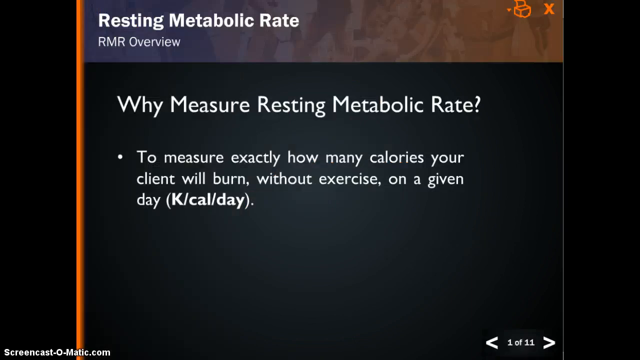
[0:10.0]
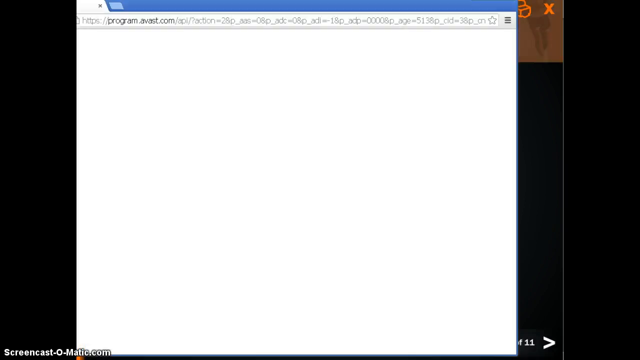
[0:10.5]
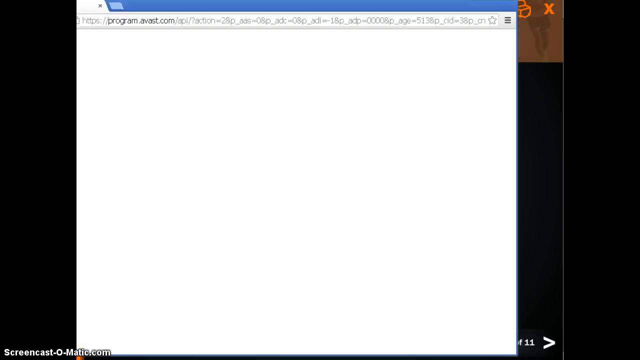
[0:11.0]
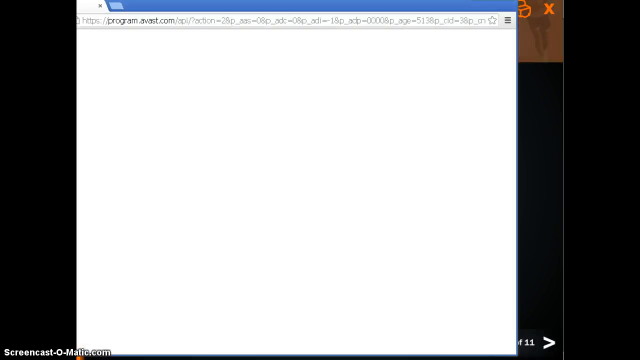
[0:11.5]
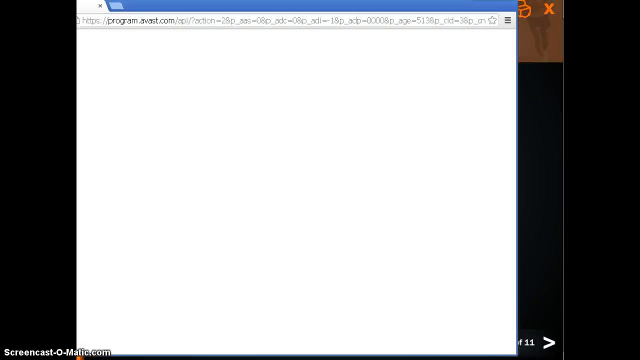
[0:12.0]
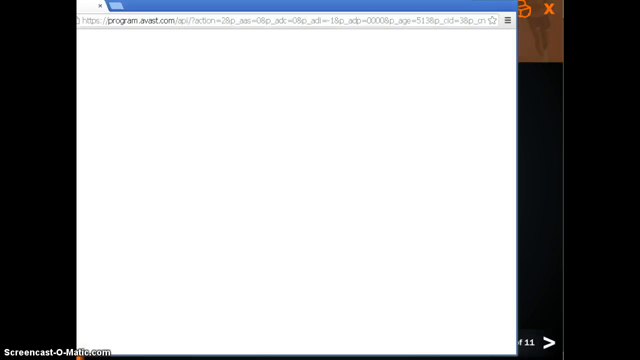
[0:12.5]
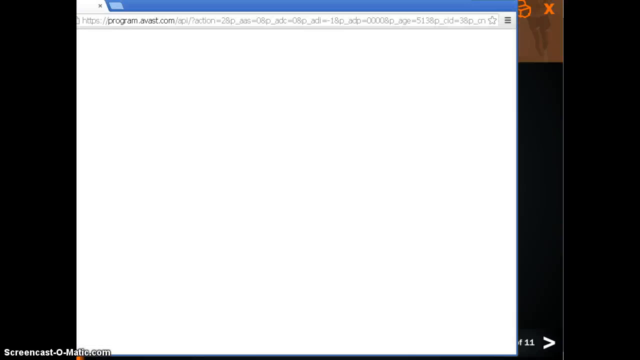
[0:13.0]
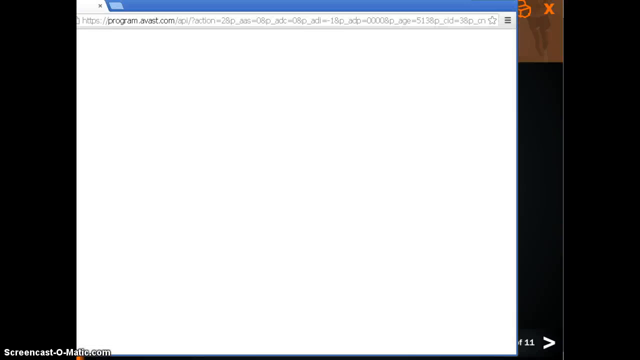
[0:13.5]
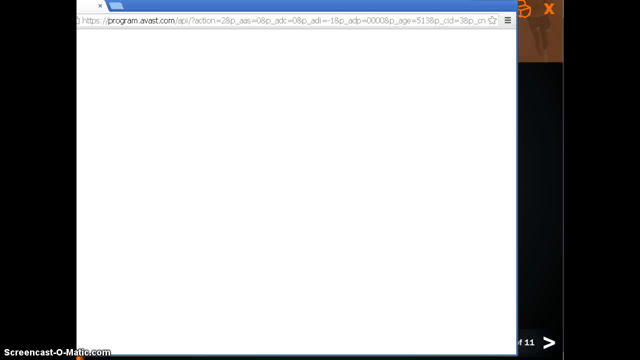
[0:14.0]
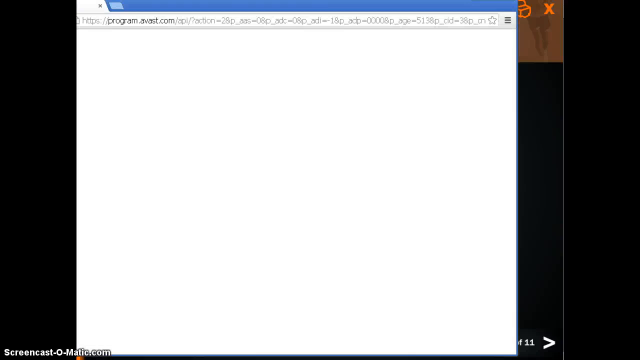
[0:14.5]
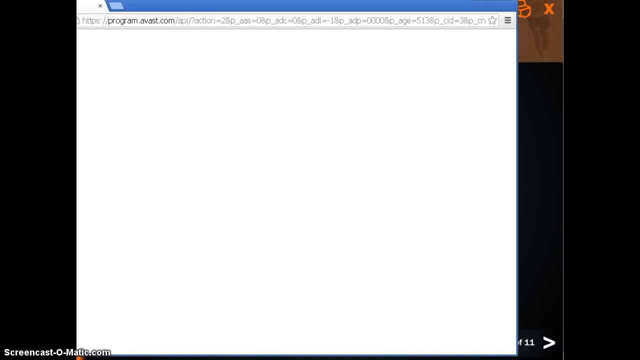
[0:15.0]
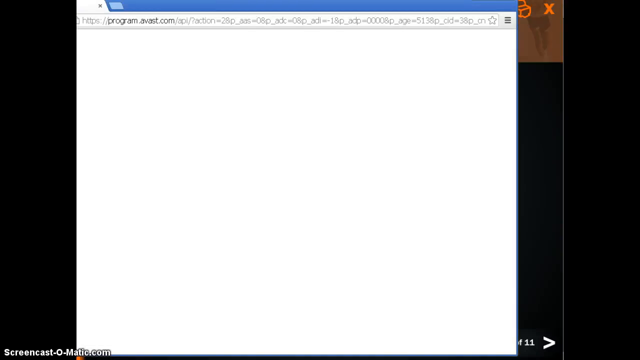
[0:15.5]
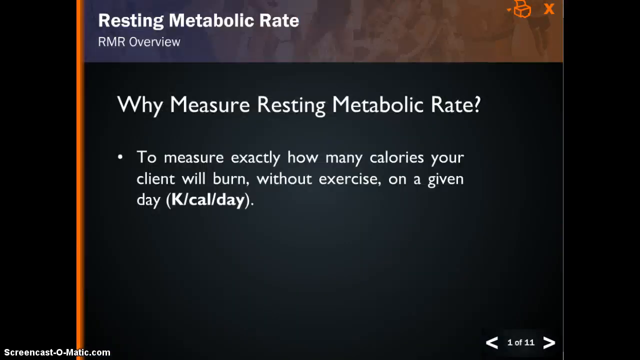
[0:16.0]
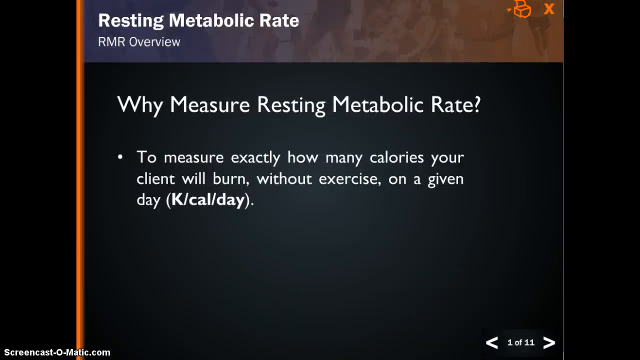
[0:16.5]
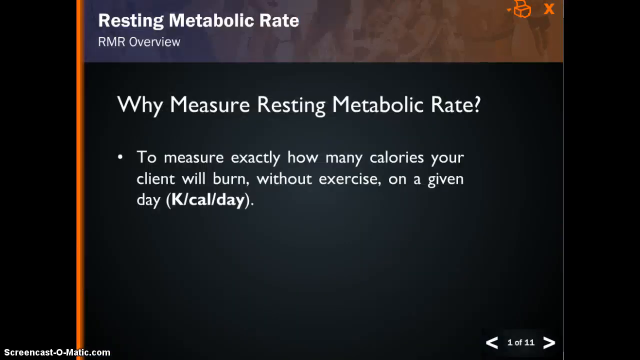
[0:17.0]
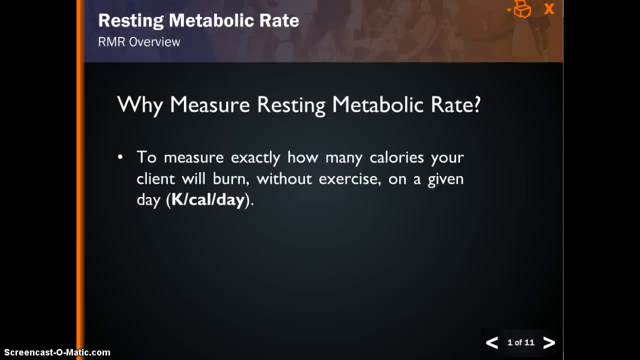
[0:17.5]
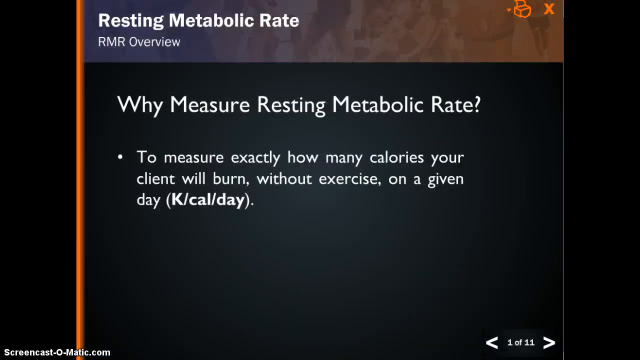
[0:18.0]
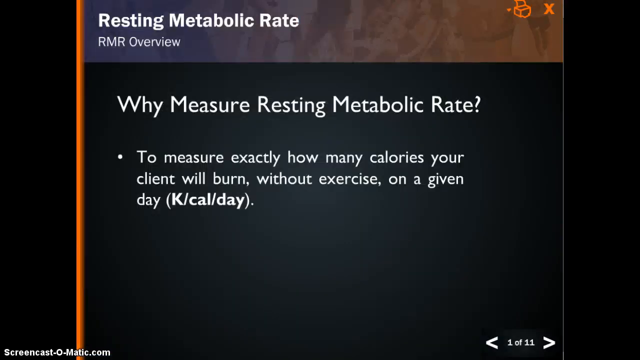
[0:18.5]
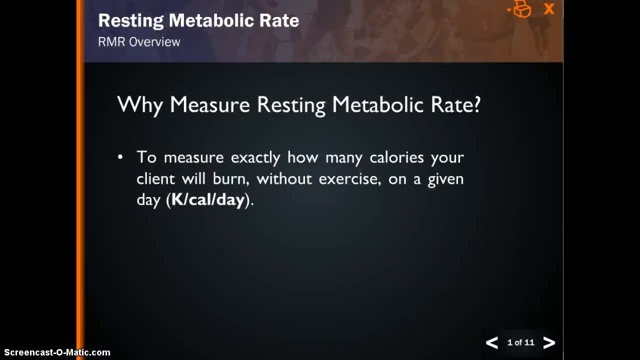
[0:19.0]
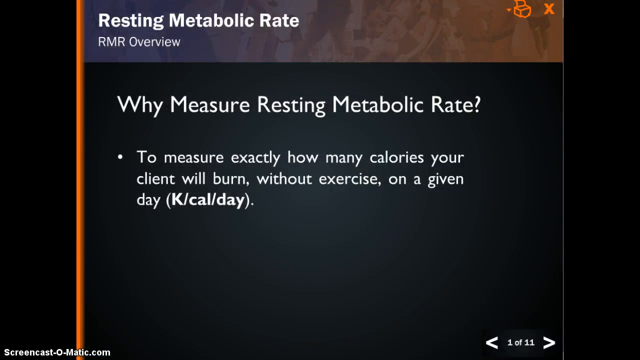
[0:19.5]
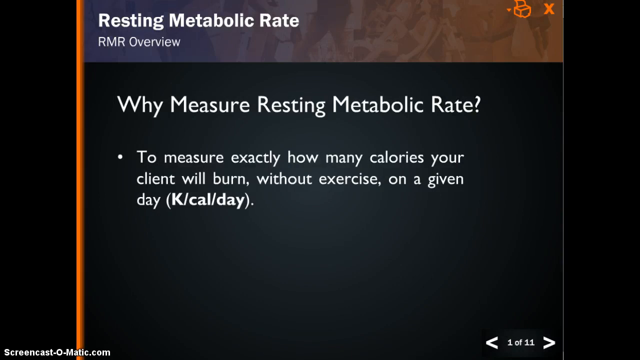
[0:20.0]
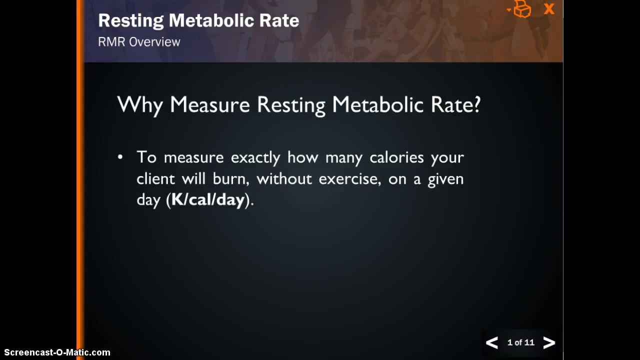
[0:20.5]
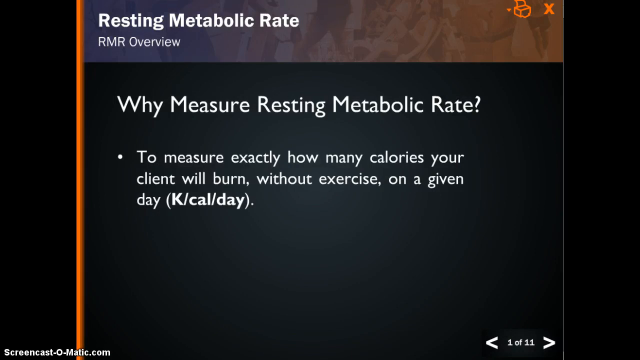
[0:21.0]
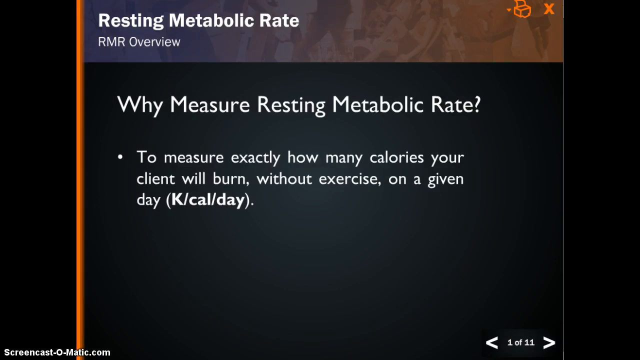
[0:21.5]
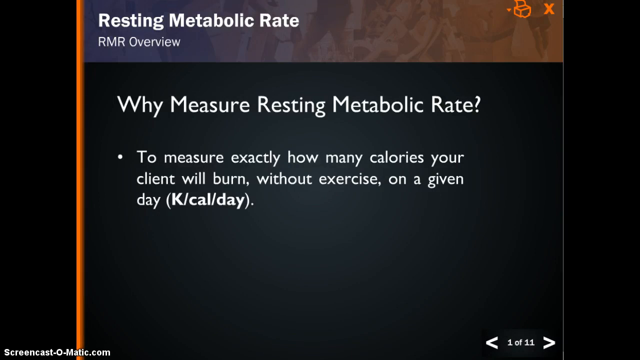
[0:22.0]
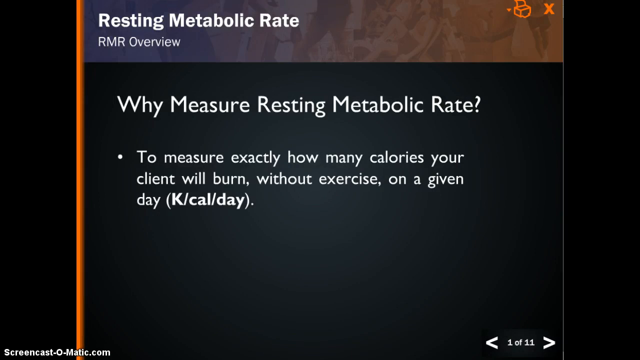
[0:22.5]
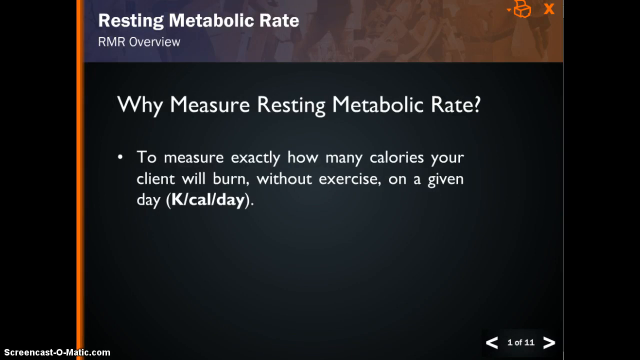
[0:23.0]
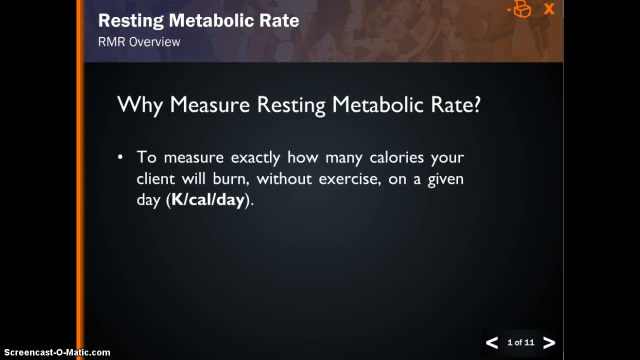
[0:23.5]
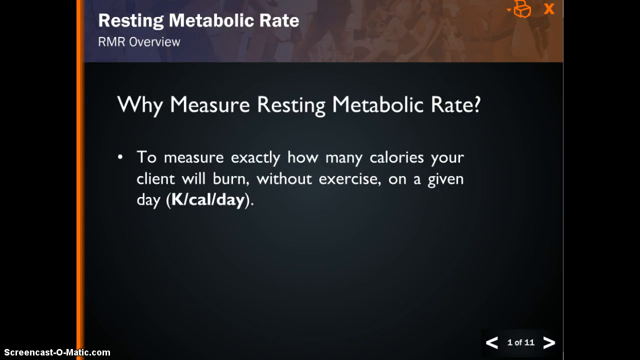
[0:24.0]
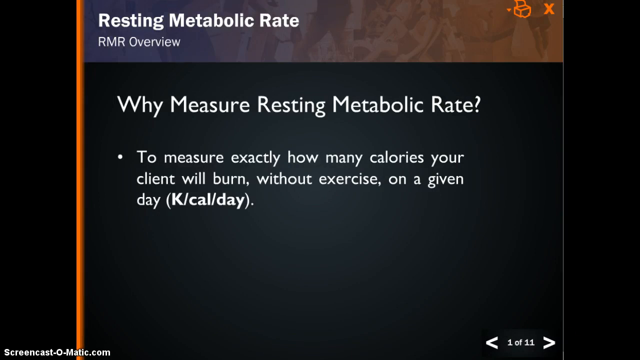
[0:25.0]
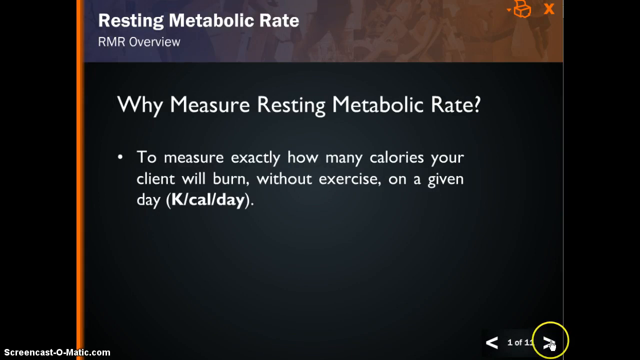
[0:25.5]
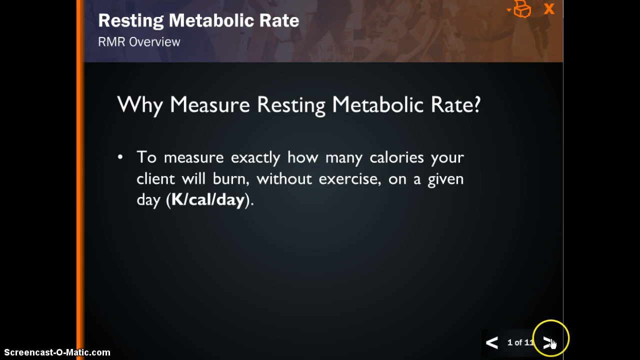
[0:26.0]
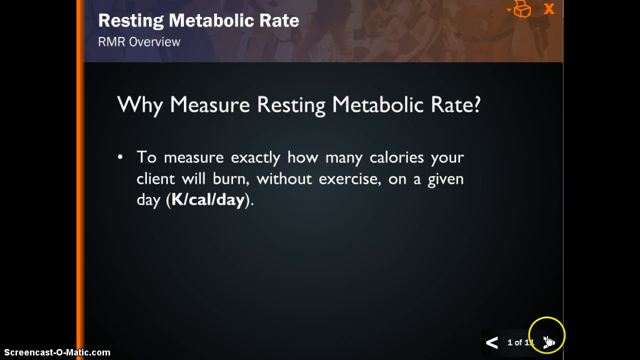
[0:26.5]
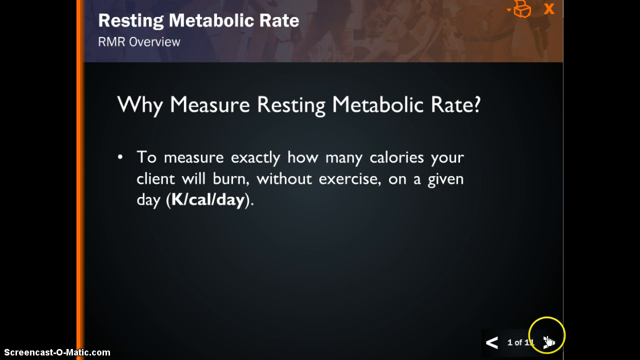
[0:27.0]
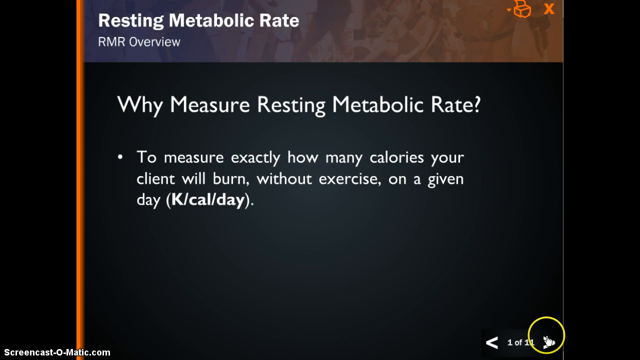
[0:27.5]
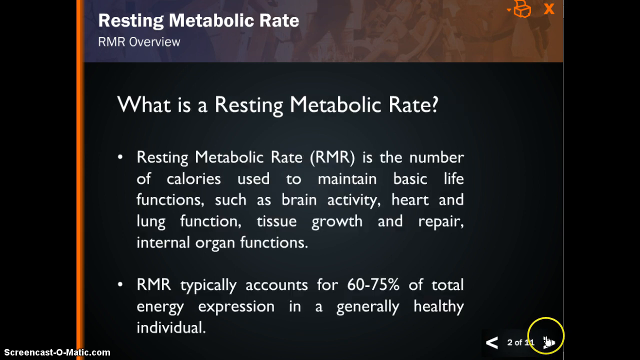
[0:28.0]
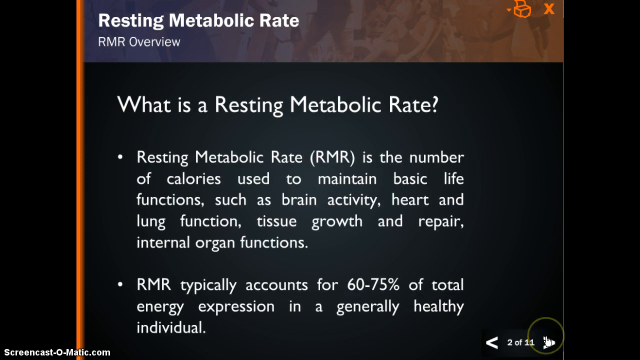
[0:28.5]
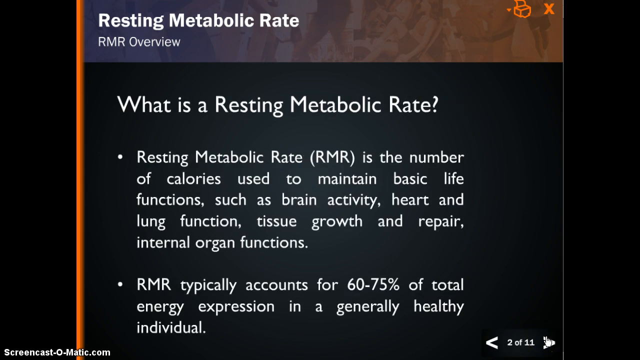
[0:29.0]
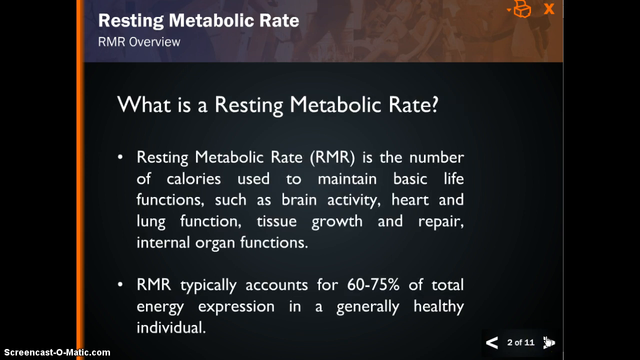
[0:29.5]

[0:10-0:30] An older-style browser page appears with the URL "program.avast.com" entered in the search bar. The webpage loads before the screen returns to the resting metabolic rate slide, which has an X icon and a printer icon on top. More text appears on the slide, describing resting metabolic rate as the number of calories used to maintain basic life functions, including brain, heart and lung function as well as tissue growth and repair. Another bullet point states "RMR typically accounts for 60-75% of total energy expression in a generally healthy individual." At the bottom right of the slide are two arrows with the text "2 of 11" between them, and a website, "screencast-o-matic.com", is listed on the left of the screen.